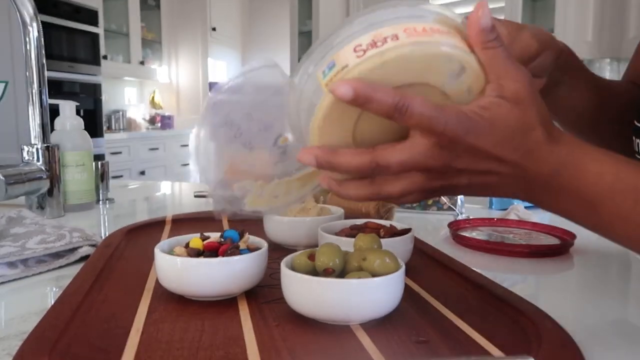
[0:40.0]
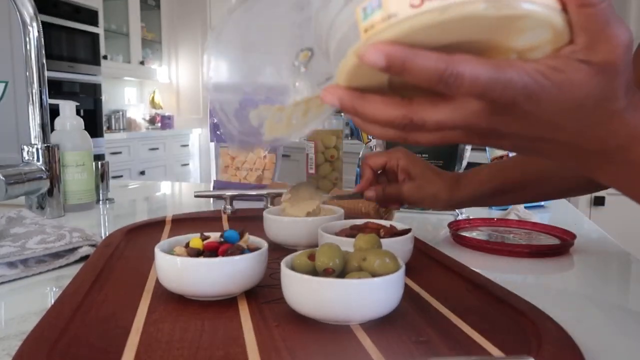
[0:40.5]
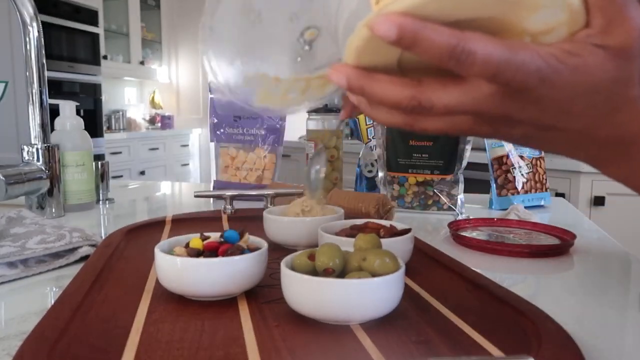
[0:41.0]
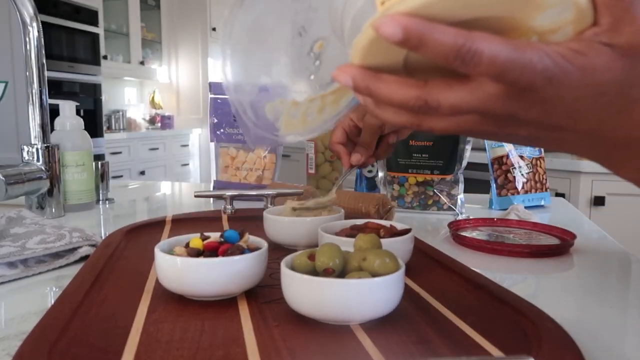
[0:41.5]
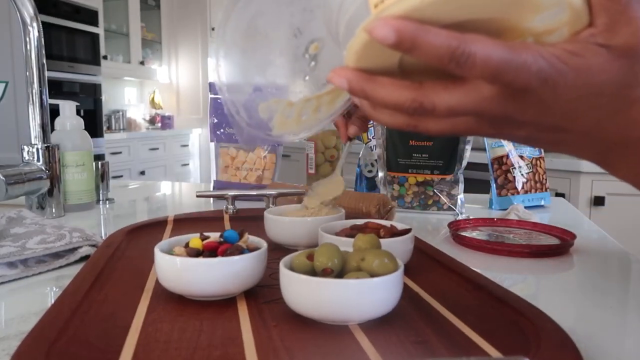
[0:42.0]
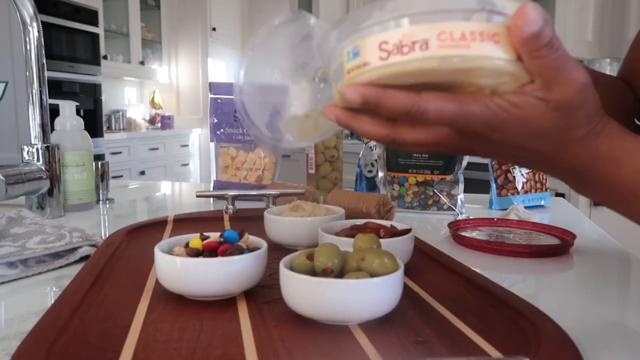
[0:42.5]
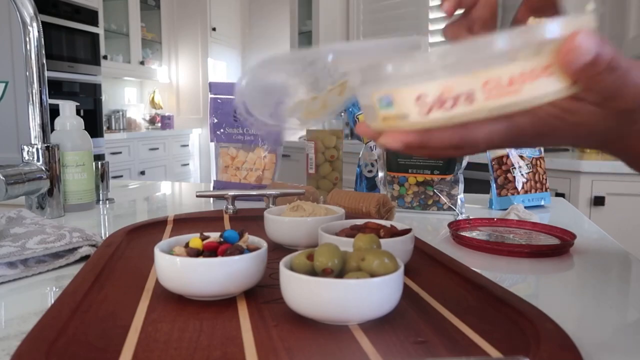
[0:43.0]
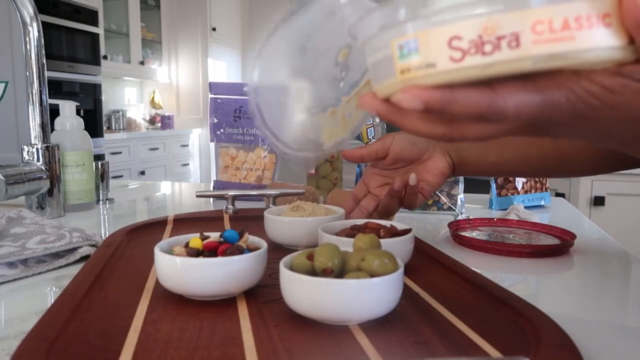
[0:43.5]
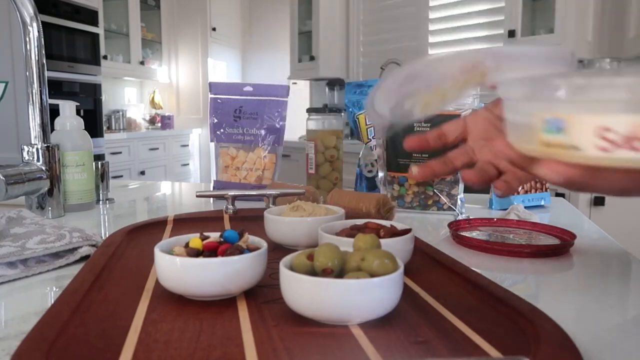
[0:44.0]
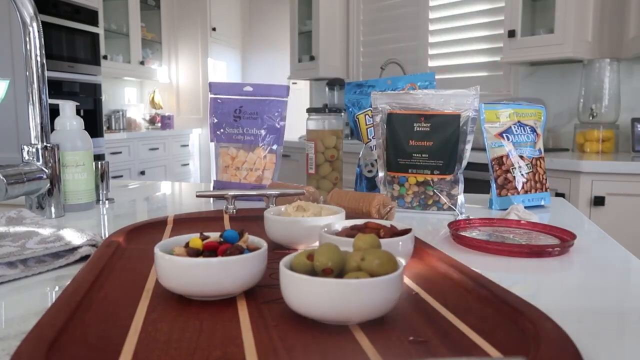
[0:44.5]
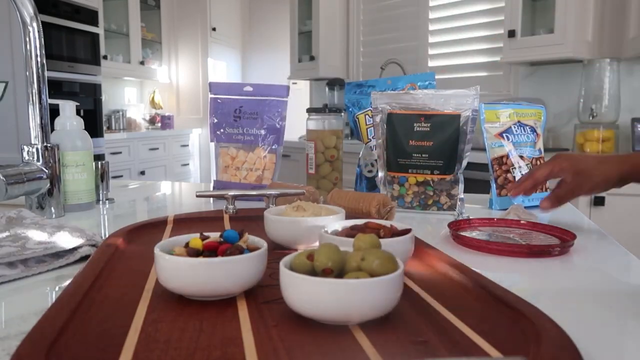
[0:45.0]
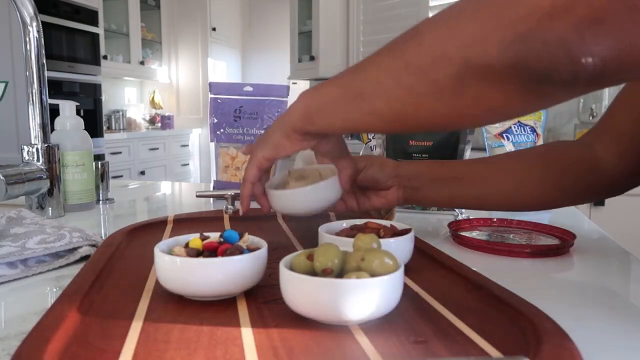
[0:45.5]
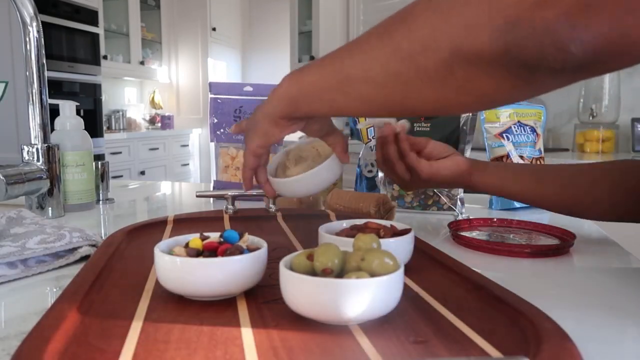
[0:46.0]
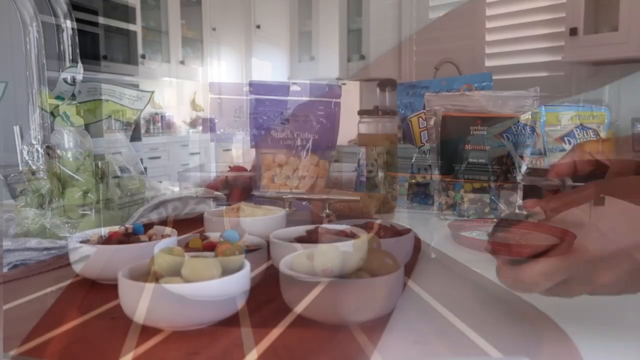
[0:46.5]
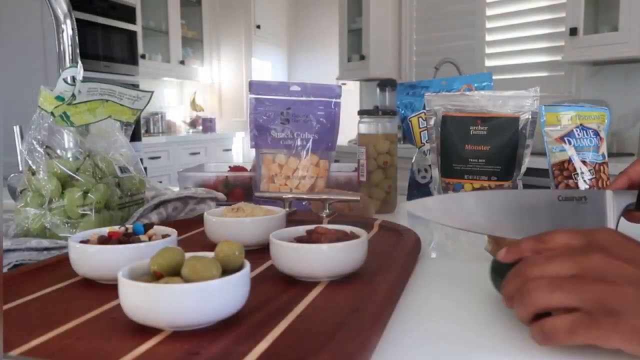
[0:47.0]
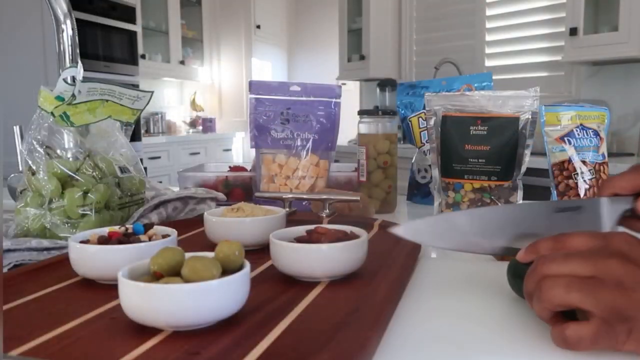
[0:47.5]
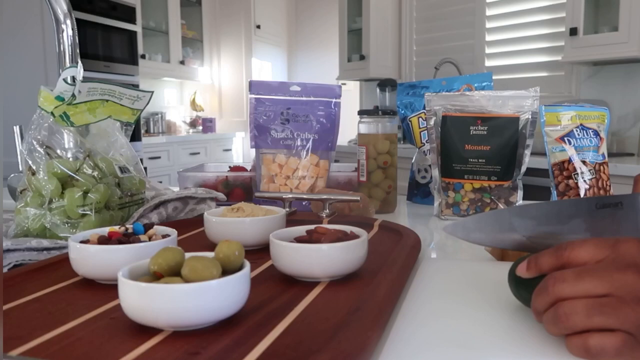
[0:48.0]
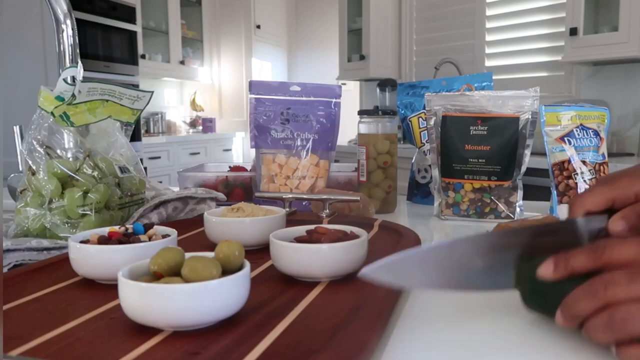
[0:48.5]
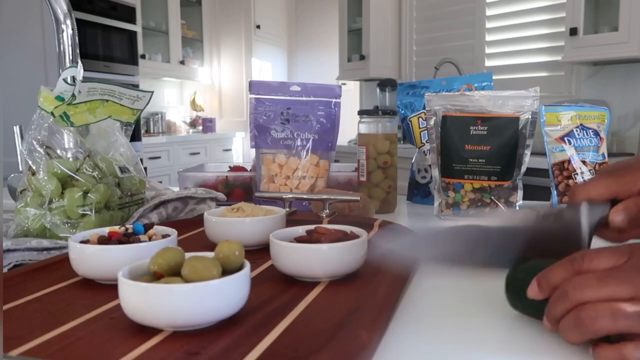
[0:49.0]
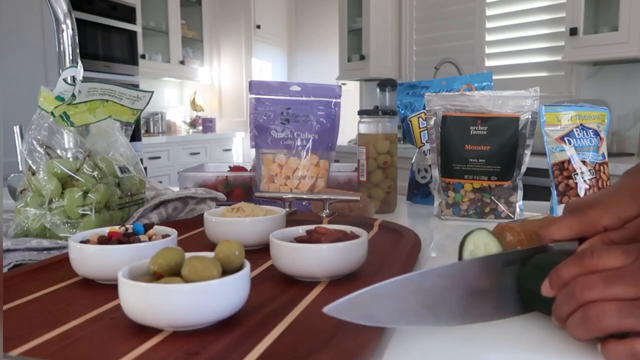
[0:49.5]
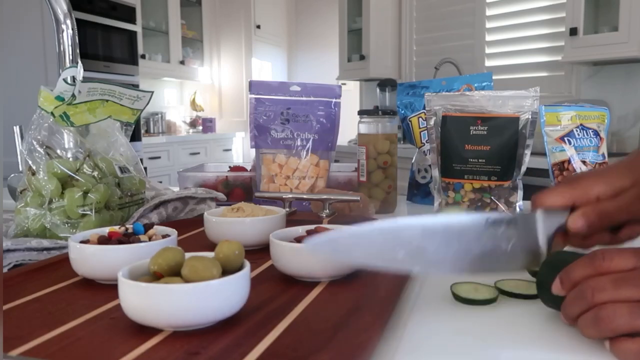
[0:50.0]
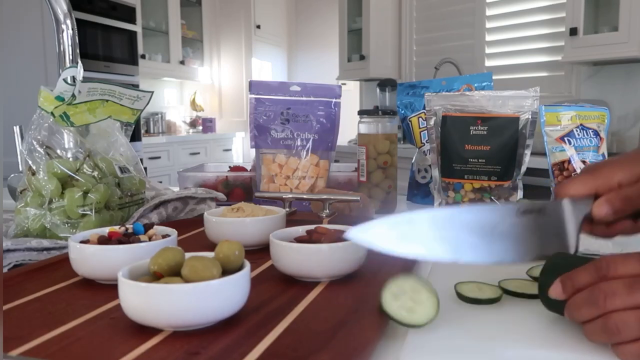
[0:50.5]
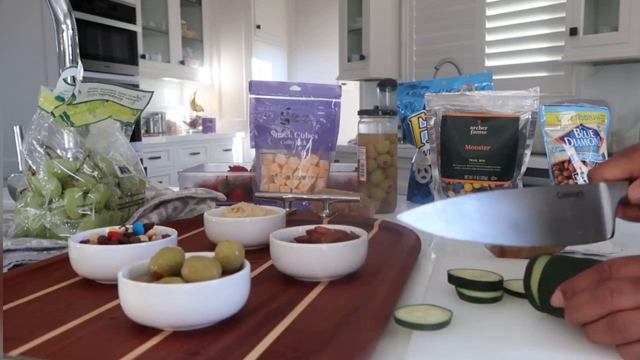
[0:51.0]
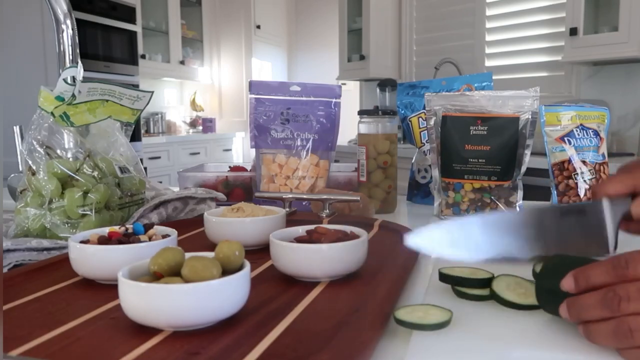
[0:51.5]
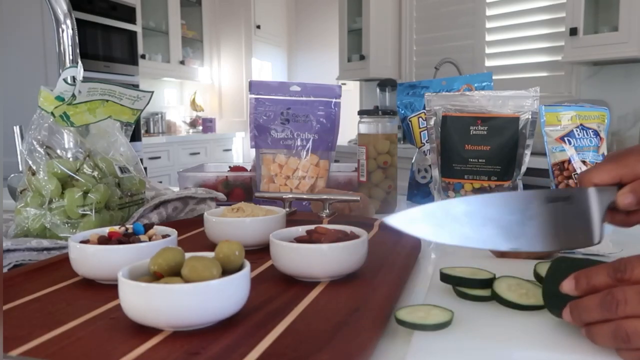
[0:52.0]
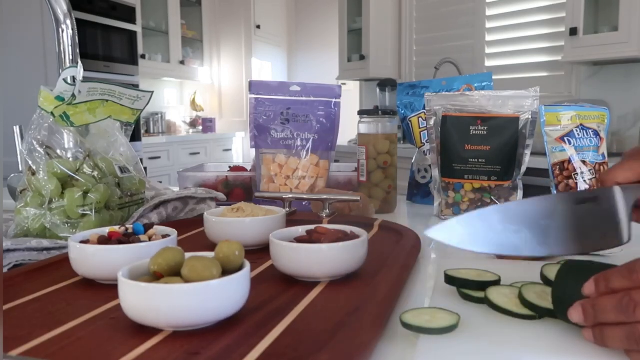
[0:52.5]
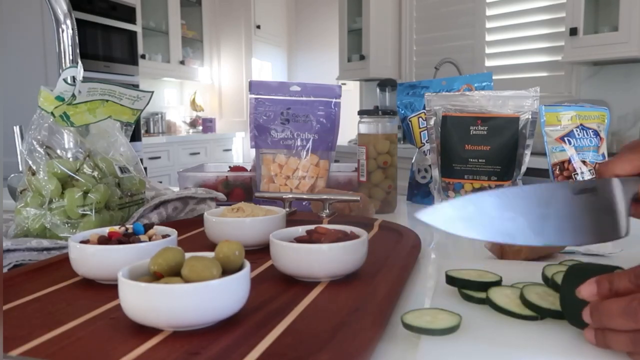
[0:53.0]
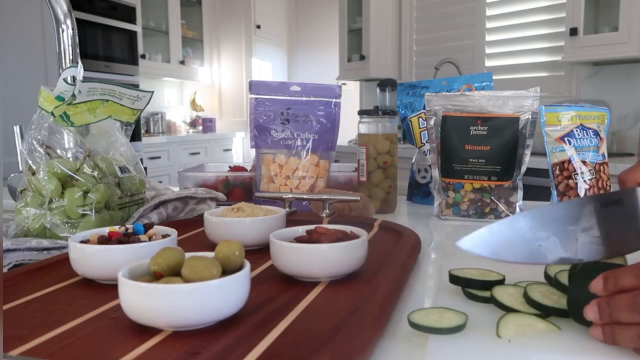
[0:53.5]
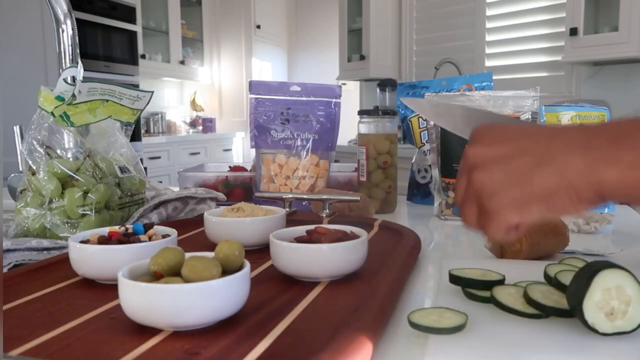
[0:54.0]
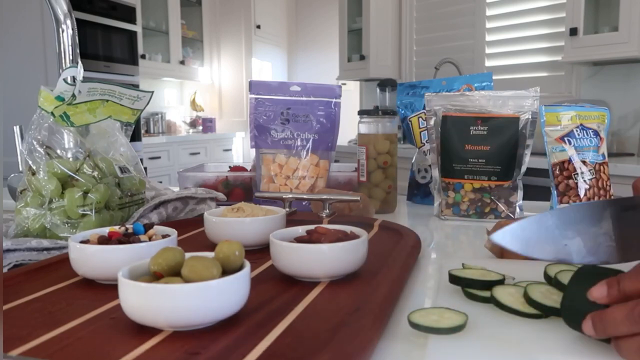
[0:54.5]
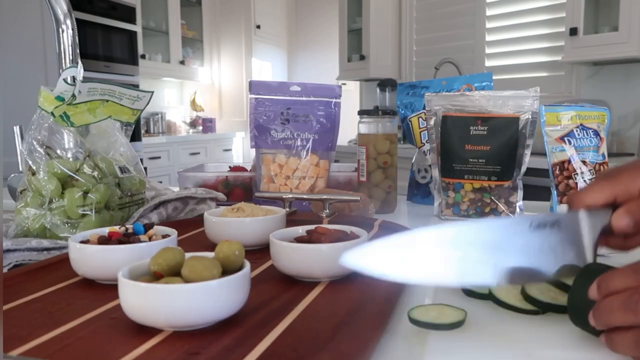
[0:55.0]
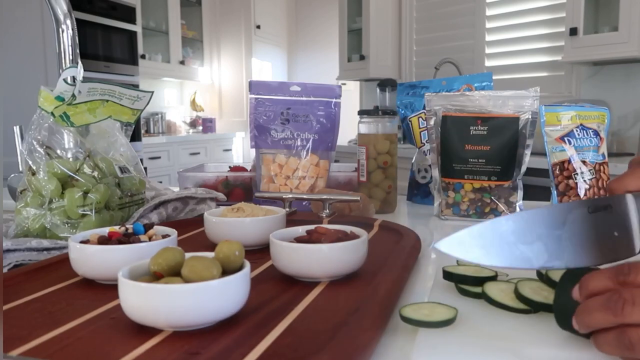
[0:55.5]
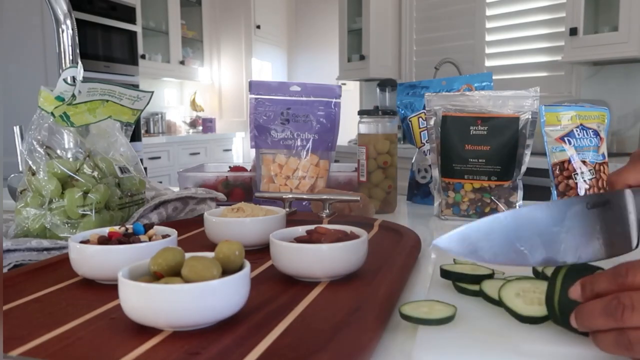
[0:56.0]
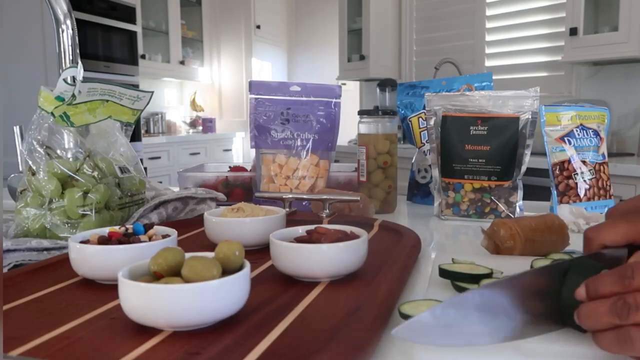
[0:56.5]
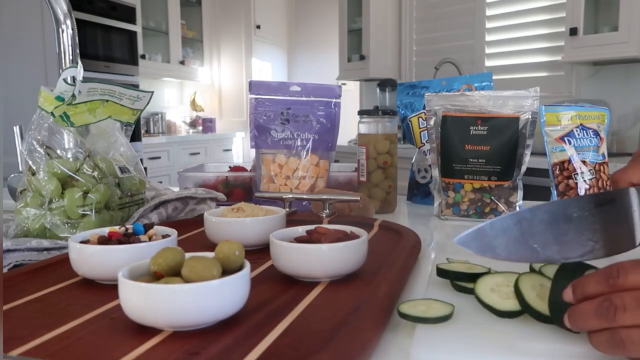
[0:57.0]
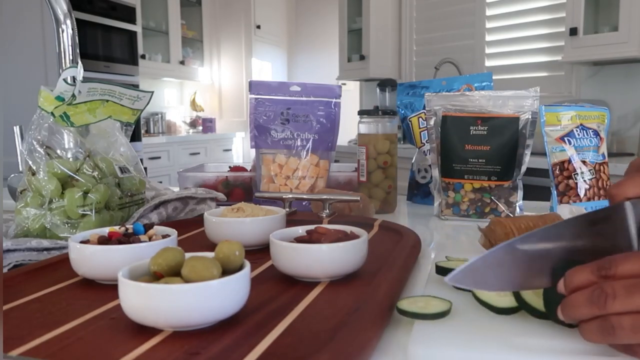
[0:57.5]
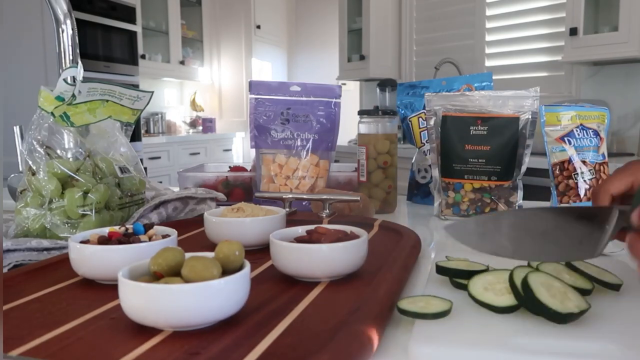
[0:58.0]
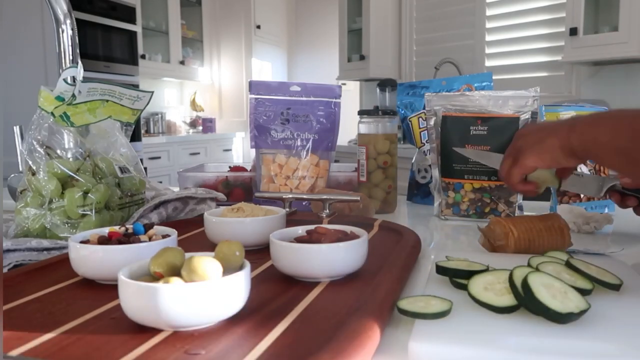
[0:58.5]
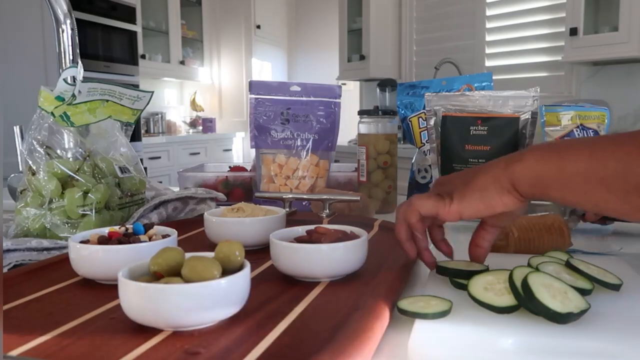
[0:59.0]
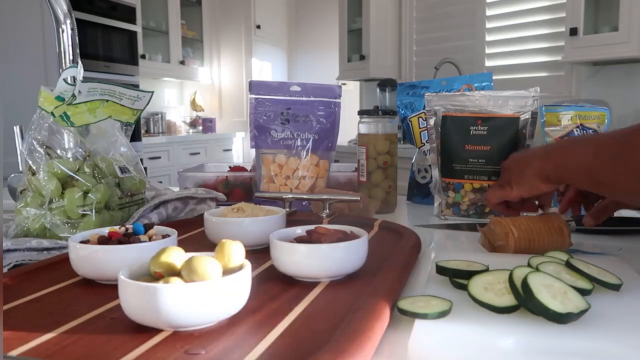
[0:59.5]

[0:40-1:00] Four salad bowls are on top of a chopping board: one has olives, one has nuts, one has the dip and one has sweets. They are placed on the kitchen counter. The kitchen has a white countertop, a blind, large kitchen counters, an oven, a microwave, hand wash and the kitchen sink. The lady is about to chop a cucumber; she chops it and puts the pieces in a bowl. There is also a packet of walnuts, a packet of sweets, a packet of pretzels and a packet of grapes. One of the lady's nails is missing.